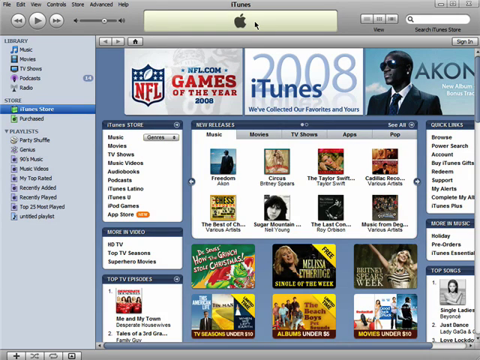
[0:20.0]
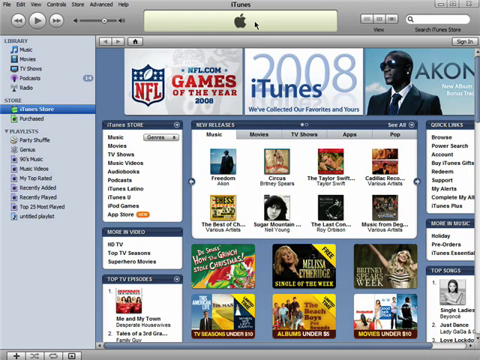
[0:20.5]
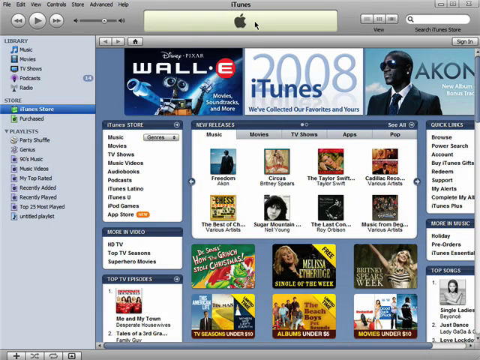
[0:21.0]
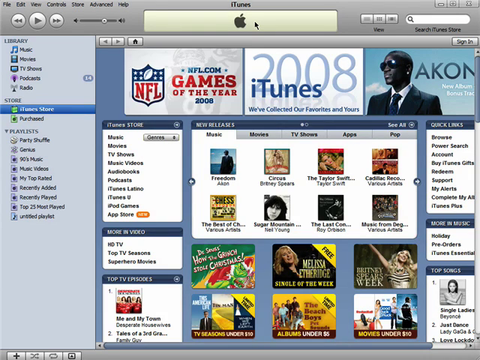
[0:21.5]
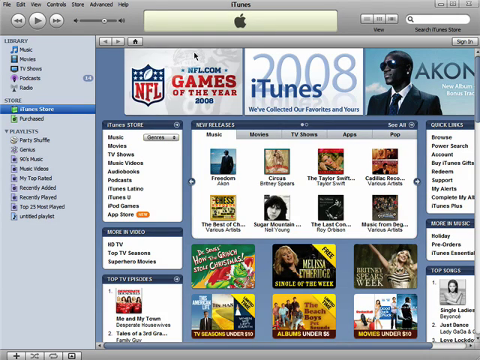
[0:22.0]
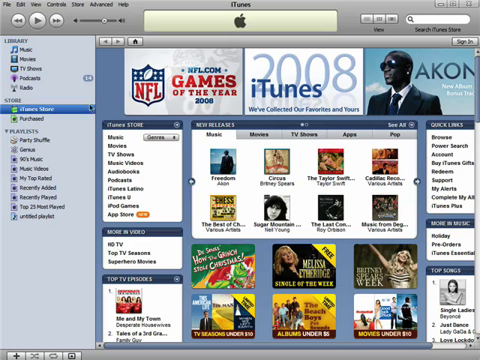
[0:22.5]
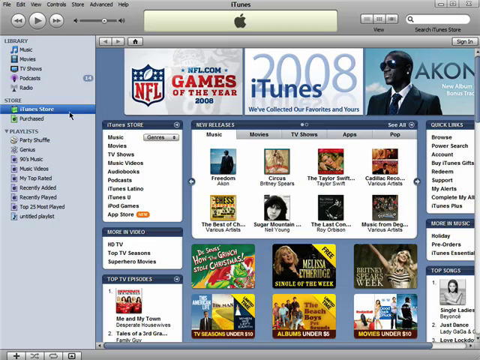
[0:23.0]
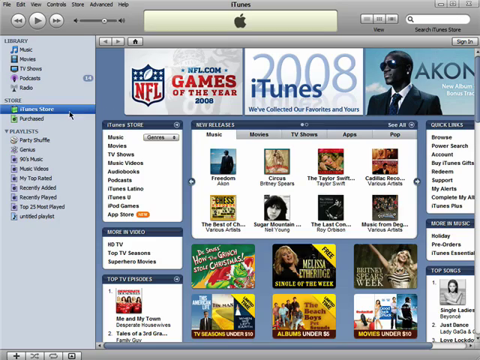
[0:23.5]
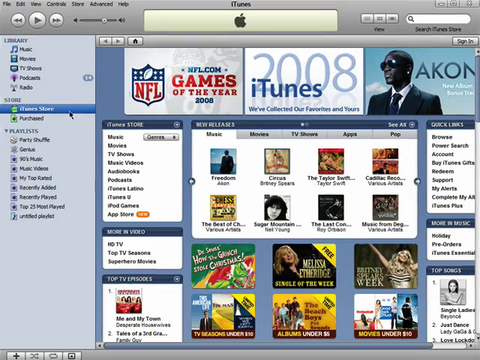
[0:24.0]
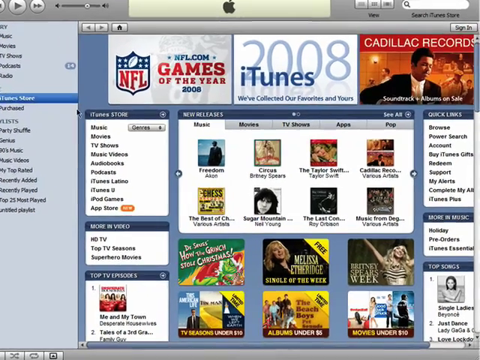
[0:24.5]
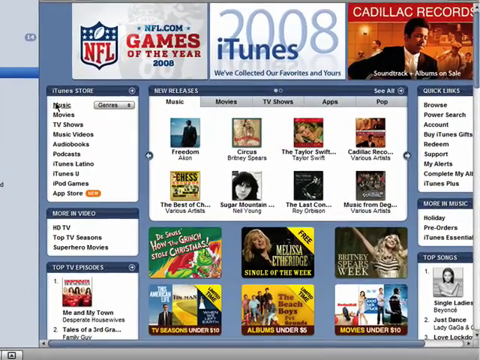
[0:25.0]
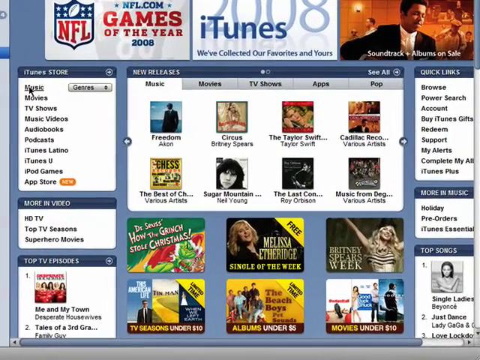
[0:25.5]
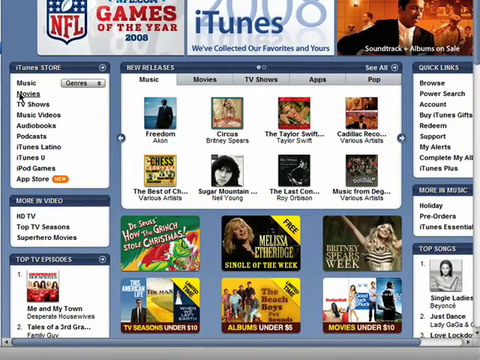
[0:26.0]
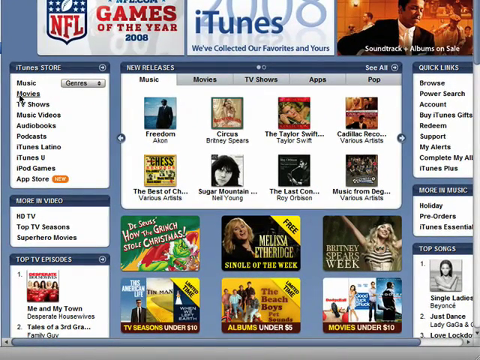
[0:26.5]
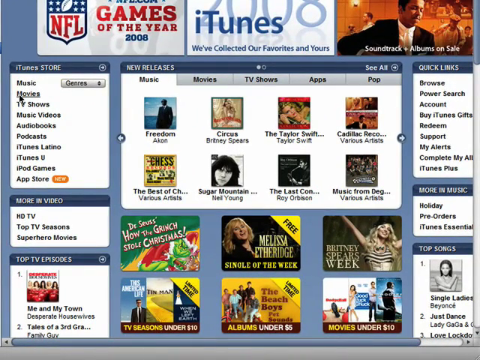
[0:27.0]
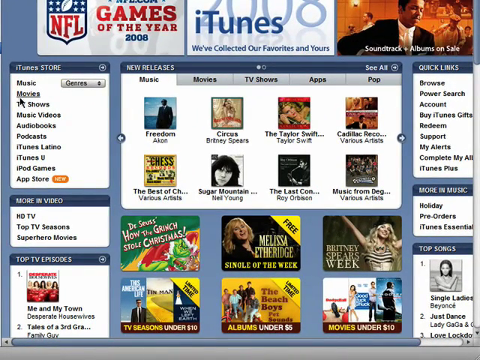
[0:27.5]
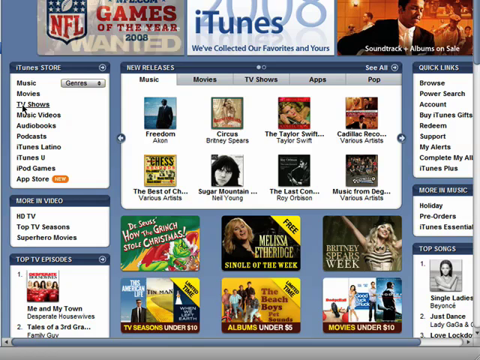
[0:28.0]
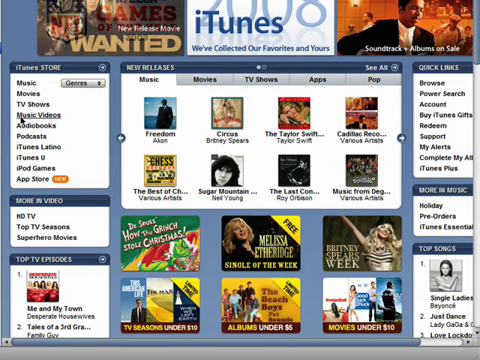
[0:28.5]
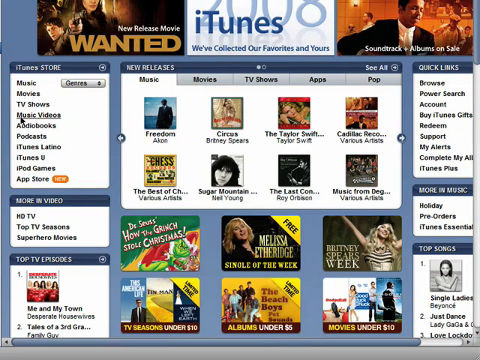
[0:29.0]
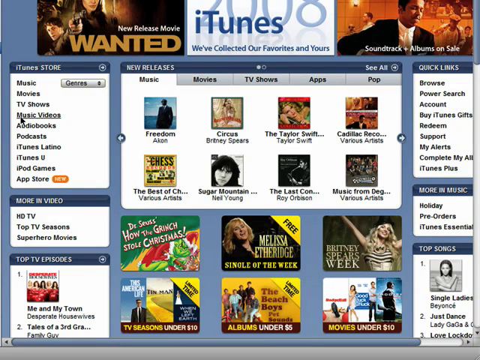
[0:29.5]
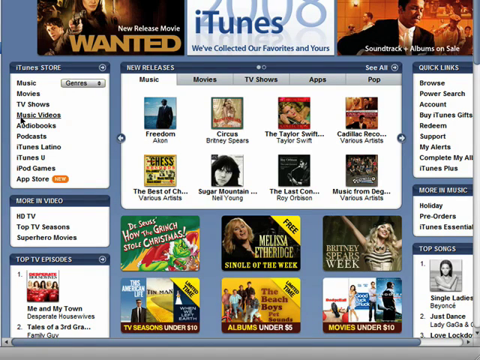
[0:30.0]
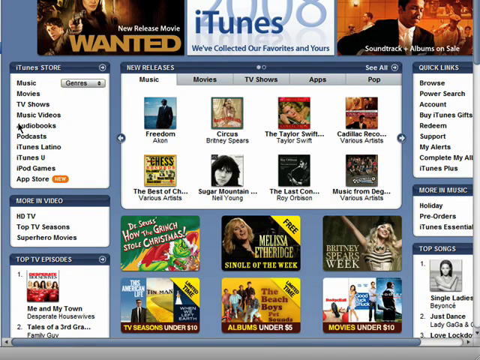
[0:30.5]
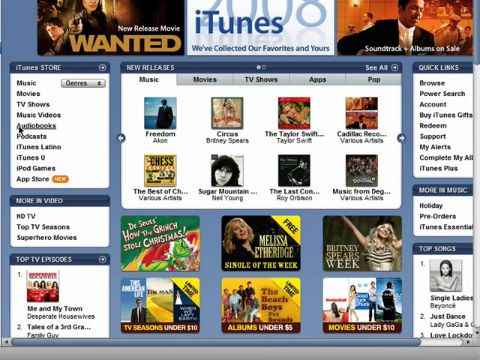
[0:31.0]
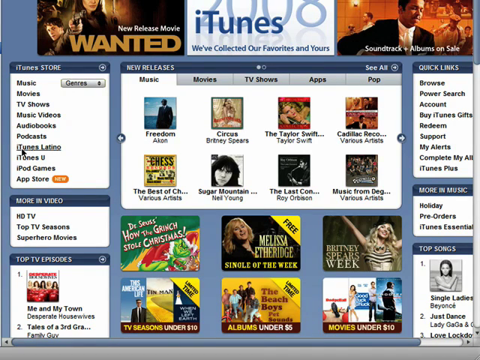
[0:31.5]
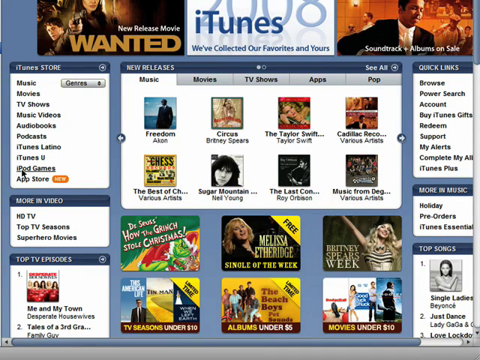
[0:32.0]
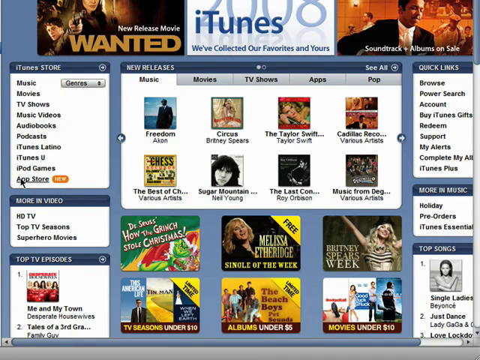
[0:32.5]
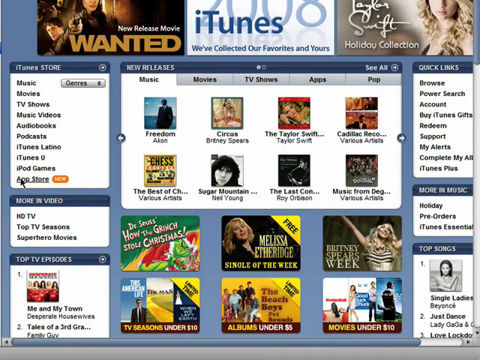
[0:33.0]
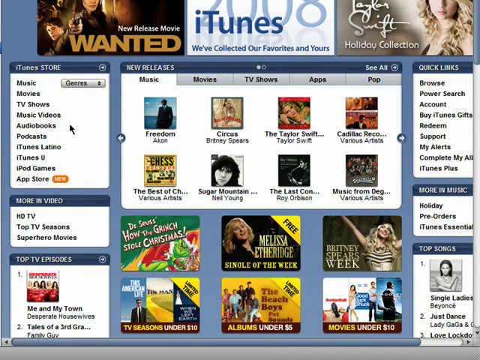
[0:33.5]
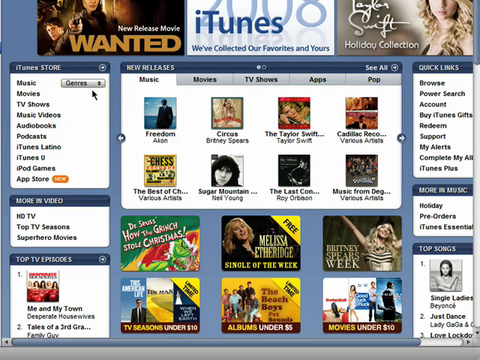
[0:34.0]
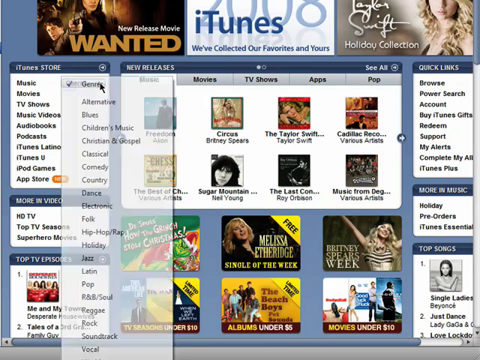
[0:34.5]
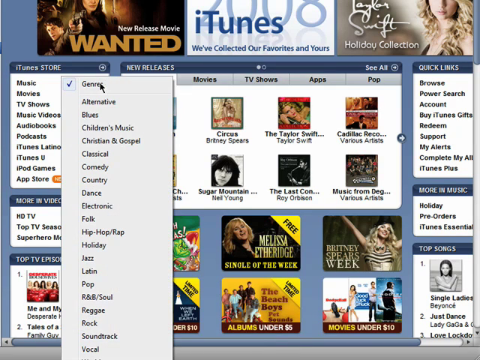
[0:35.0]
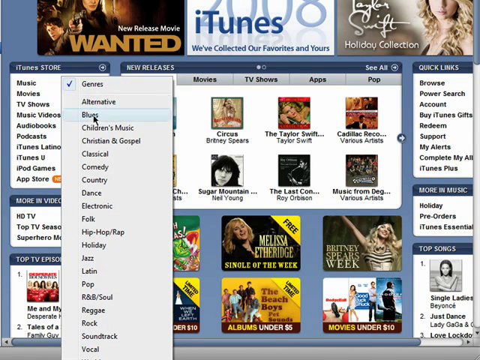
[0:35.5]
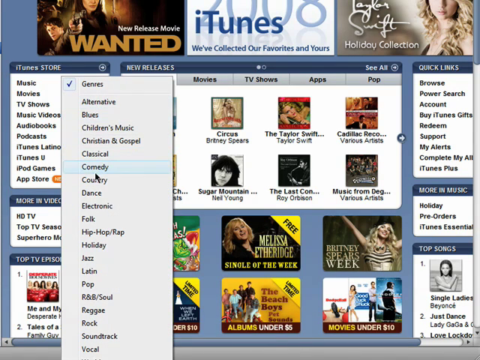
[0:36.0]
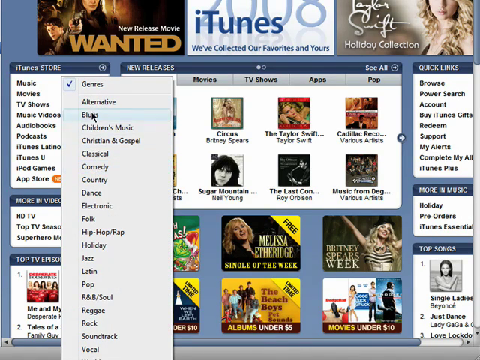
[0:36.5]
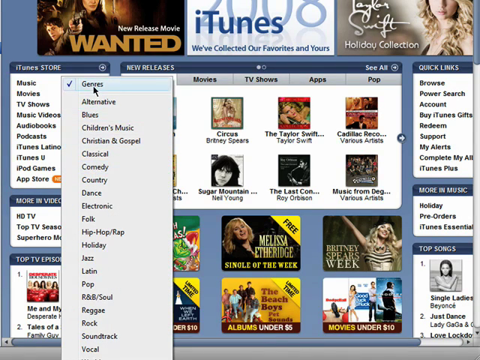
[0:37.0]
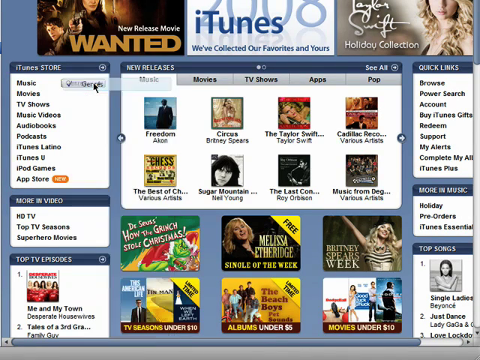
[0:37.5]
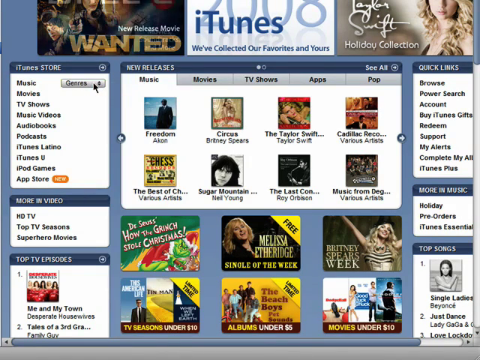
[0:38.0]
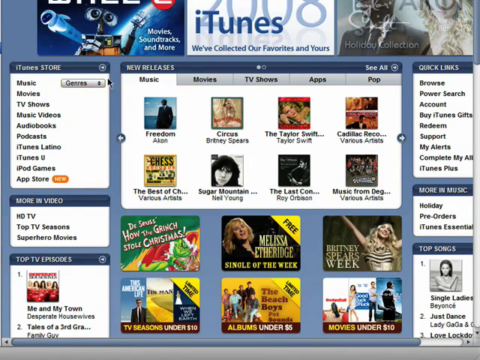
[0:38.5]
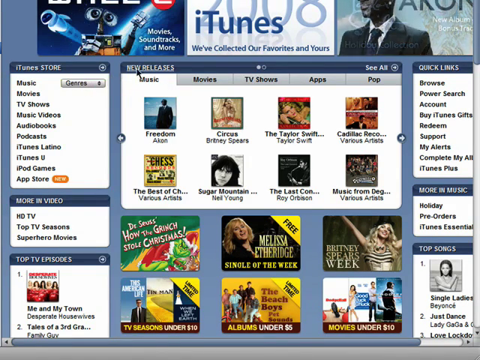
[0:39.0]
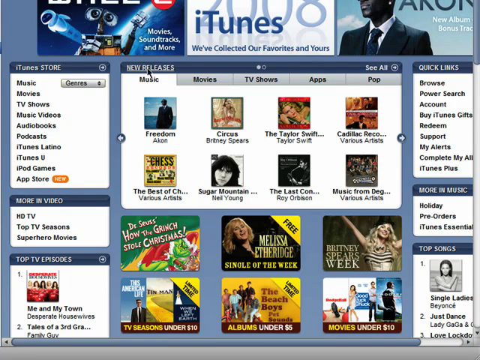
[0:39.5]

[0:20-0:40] The view zooms in for a closer look at the iTunes Store and goes through each of its categories: music, movies, TV shows, music videos, audiobooks, podcasts, iTunes Latino, iTunes U, iPod games, and App Store, which is marked as a new feature. The genre section lists alternative, blues, children's music, Christian gospel, classical, comedy, country, dance, electronic, folk, hip-hop, rap, holiday, jazz, Latin, pop, R&B, soul, reggae, rock and soundtrack. A good amount of music shows up in the new releases area, including Freedom by Akon, Circus by Britney Spears, the Taylor Swift album, Cadillac Records by various artists, The Best of Chess by various artists, Sugar Mountain by Neil Young and a Roy Orbison record, along with an available Britney Spears week.